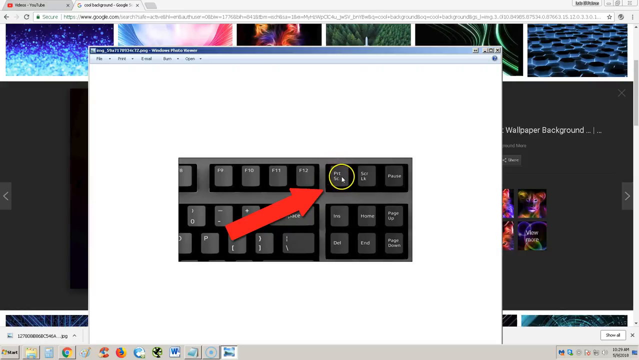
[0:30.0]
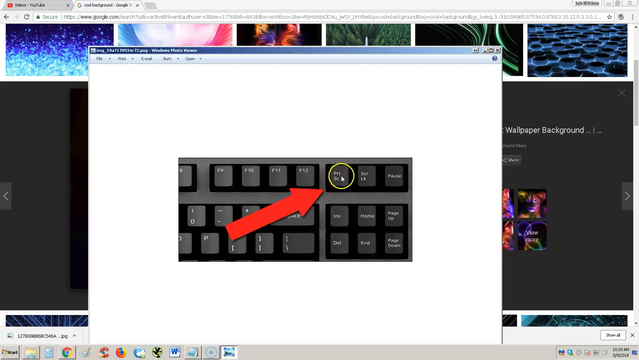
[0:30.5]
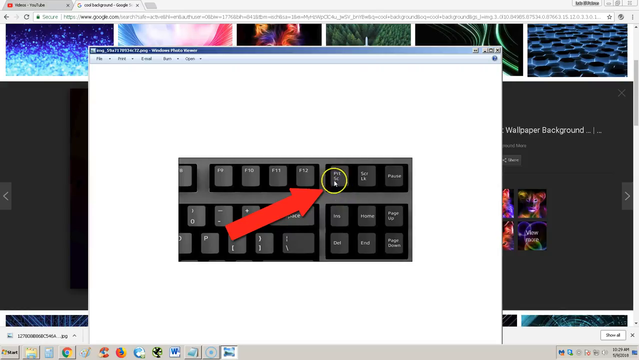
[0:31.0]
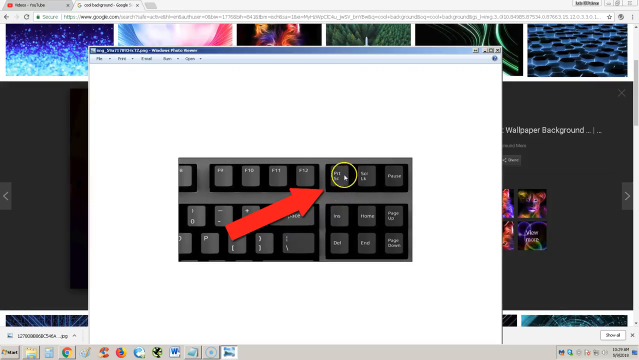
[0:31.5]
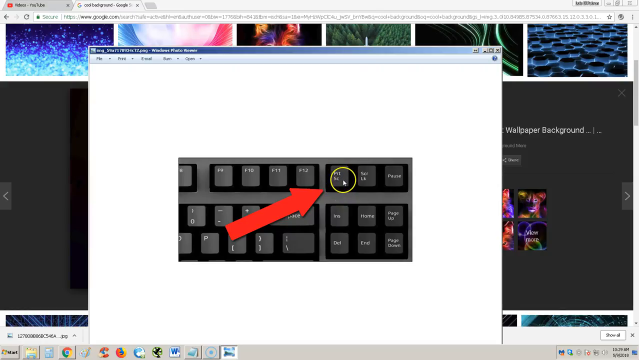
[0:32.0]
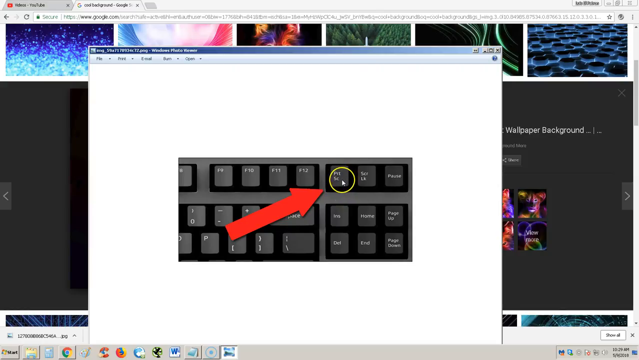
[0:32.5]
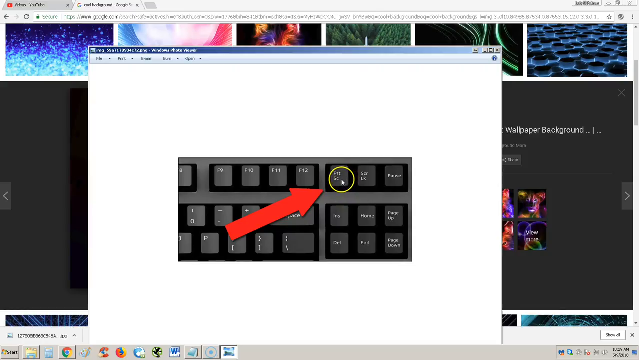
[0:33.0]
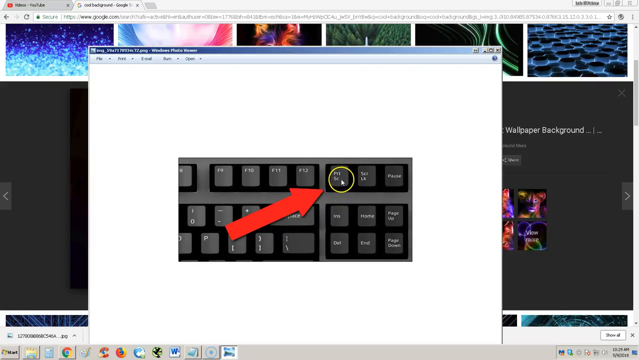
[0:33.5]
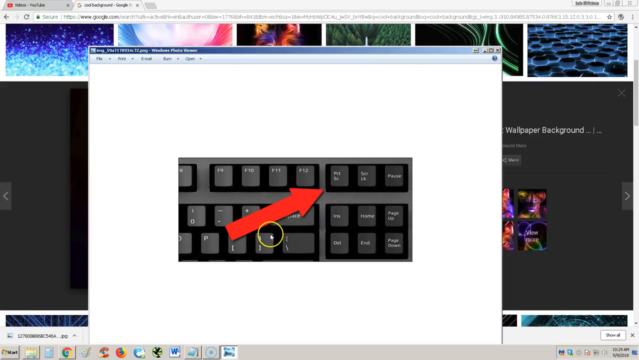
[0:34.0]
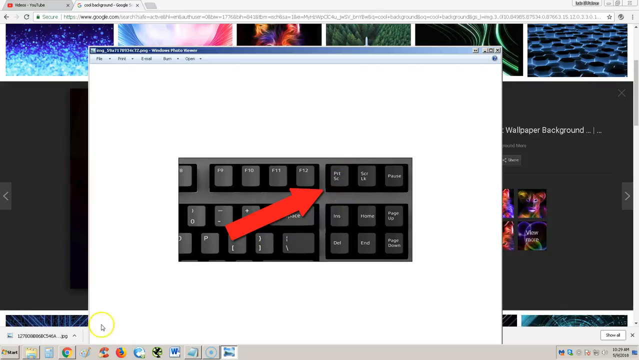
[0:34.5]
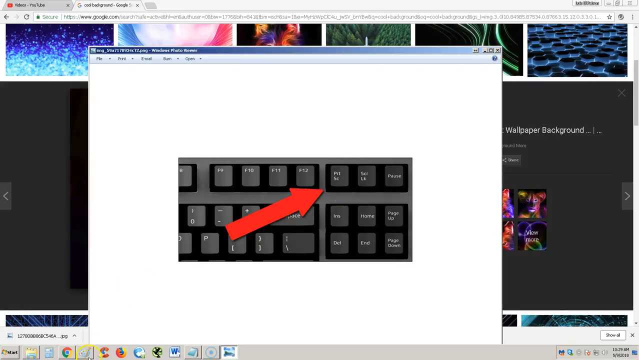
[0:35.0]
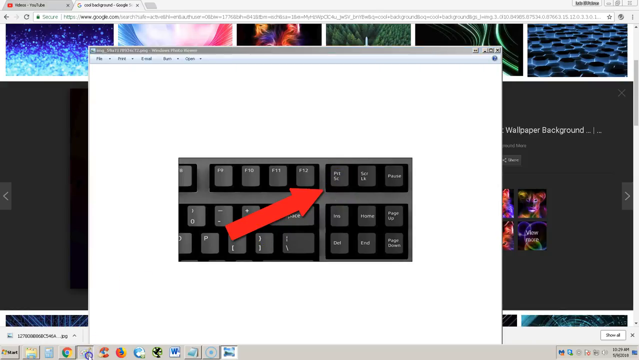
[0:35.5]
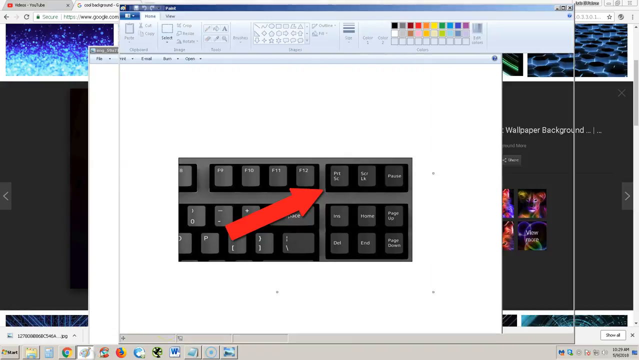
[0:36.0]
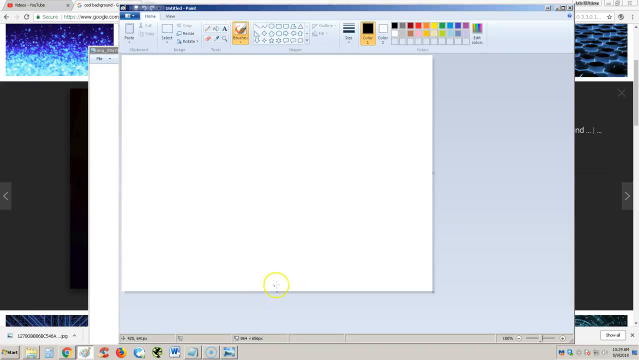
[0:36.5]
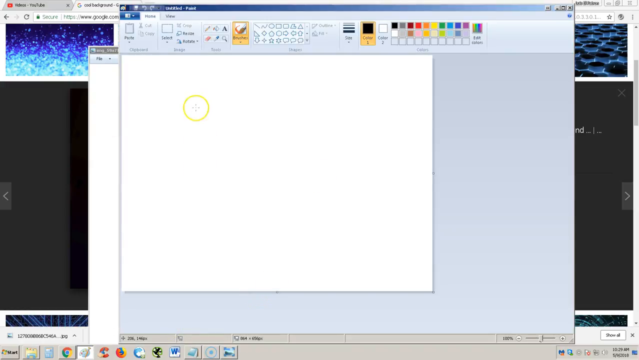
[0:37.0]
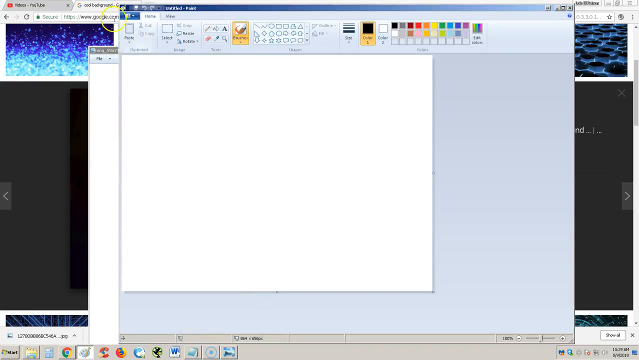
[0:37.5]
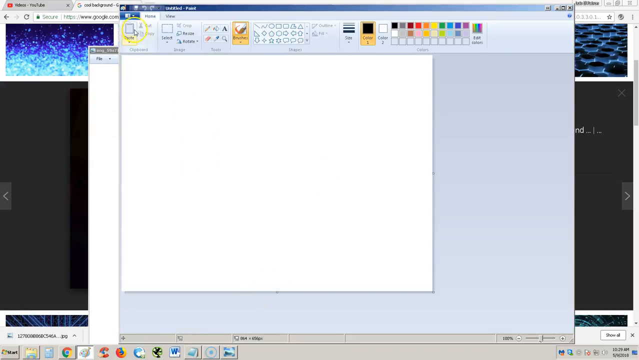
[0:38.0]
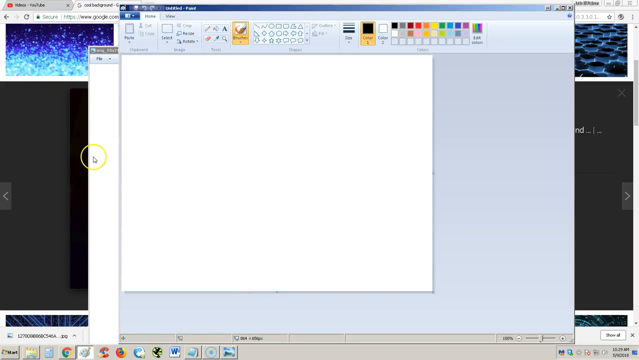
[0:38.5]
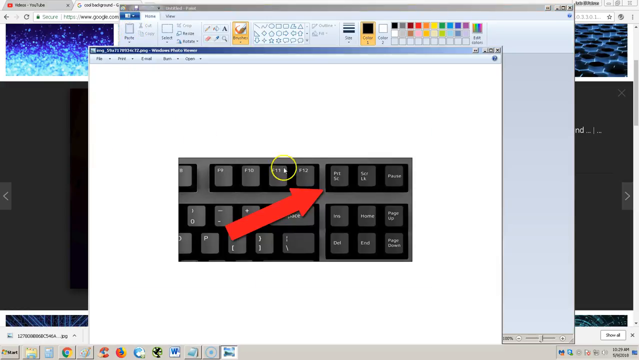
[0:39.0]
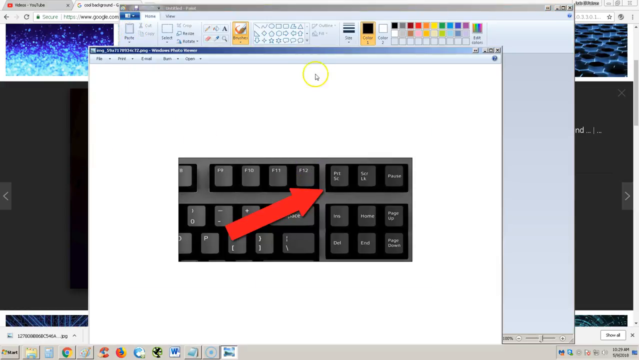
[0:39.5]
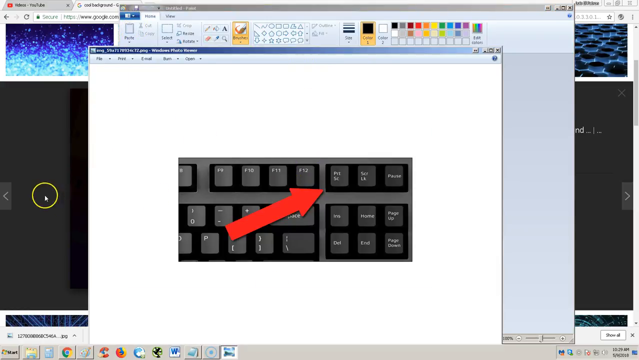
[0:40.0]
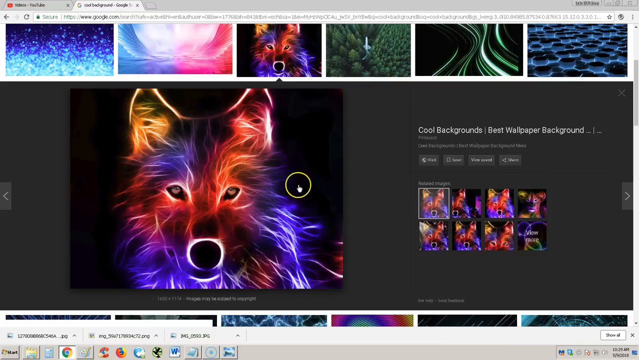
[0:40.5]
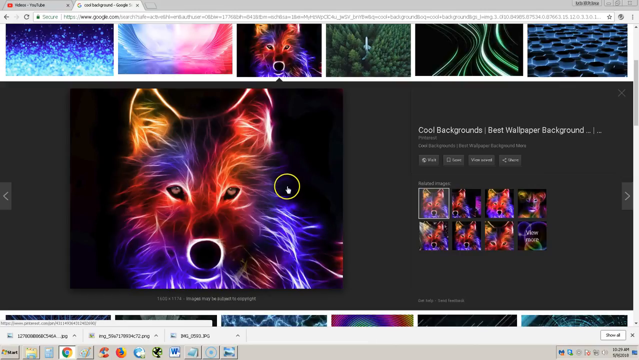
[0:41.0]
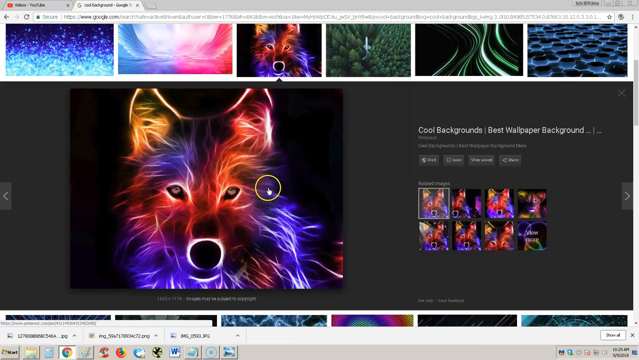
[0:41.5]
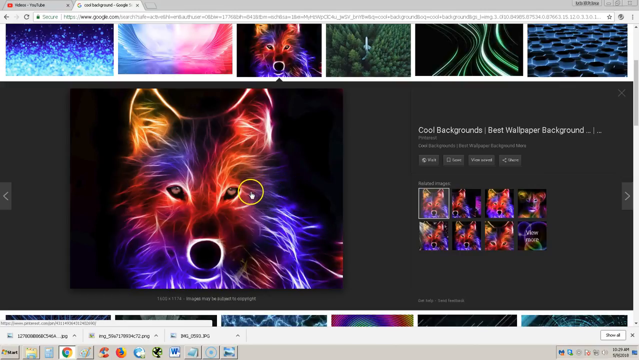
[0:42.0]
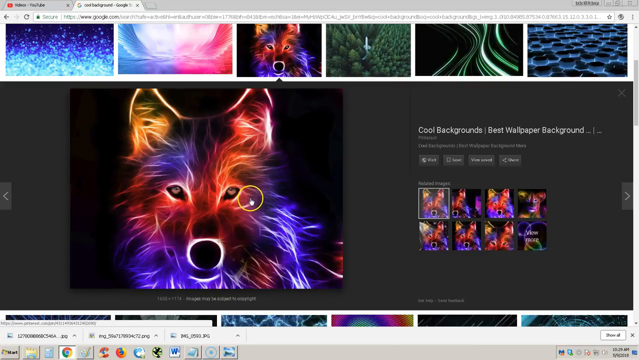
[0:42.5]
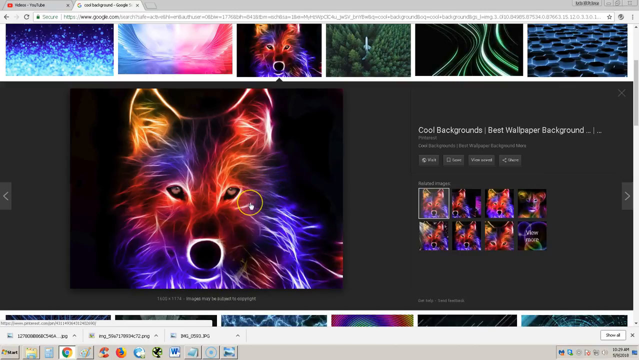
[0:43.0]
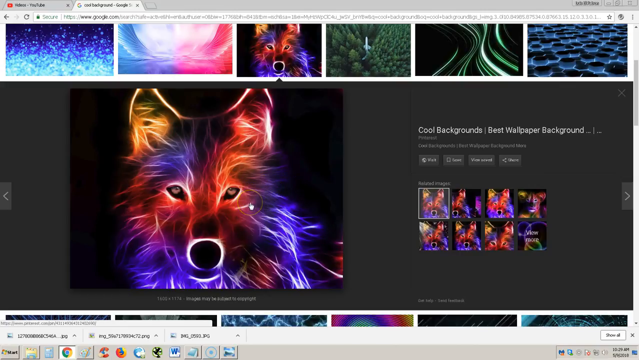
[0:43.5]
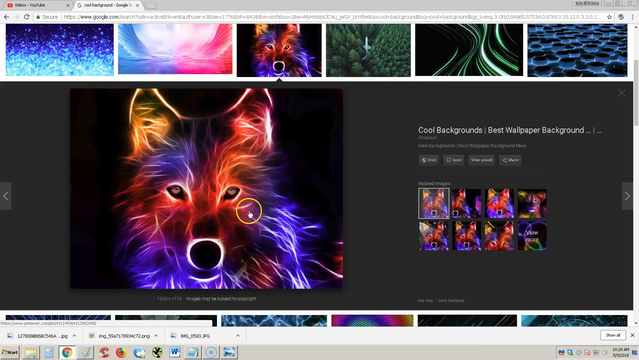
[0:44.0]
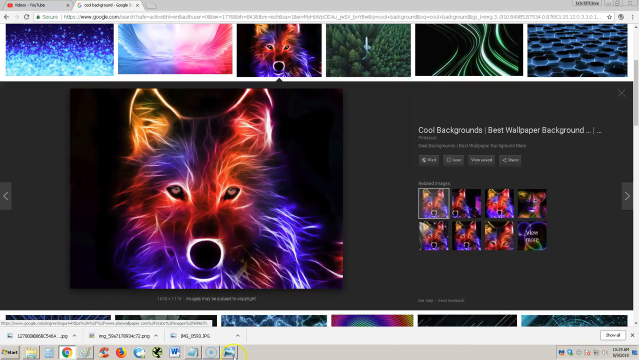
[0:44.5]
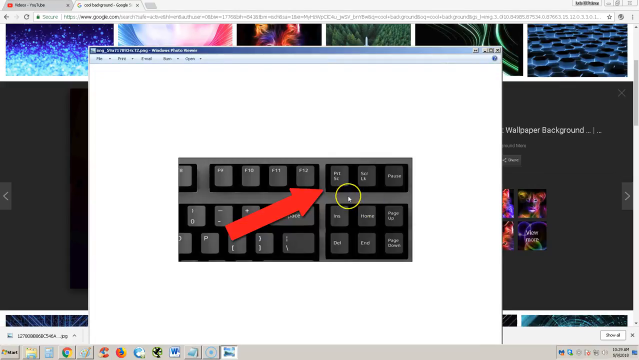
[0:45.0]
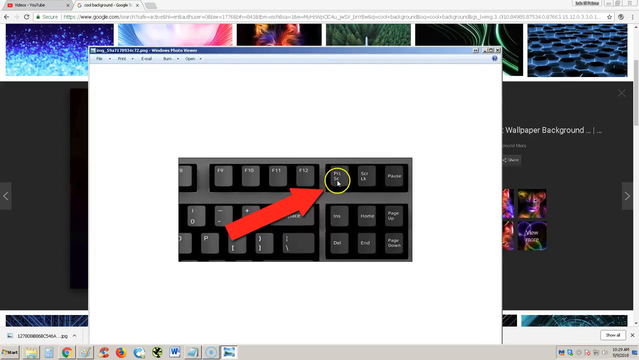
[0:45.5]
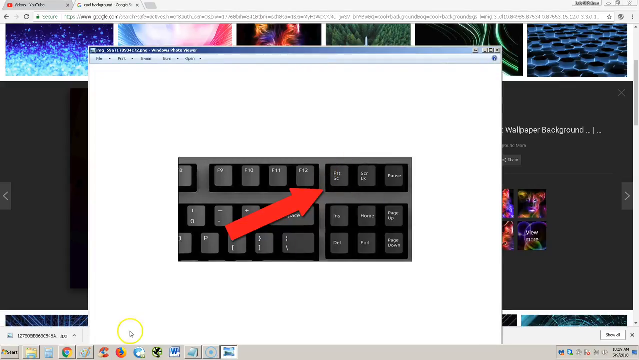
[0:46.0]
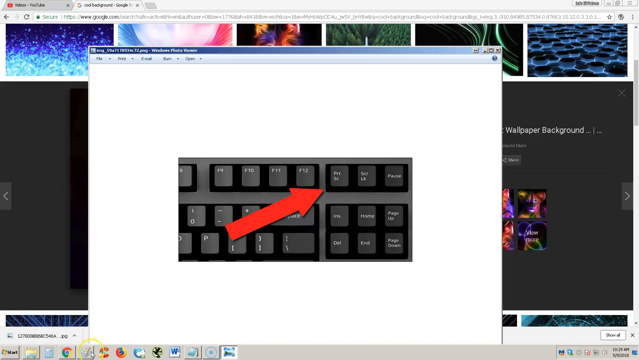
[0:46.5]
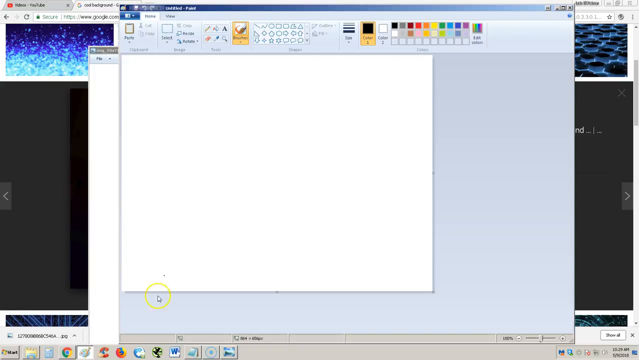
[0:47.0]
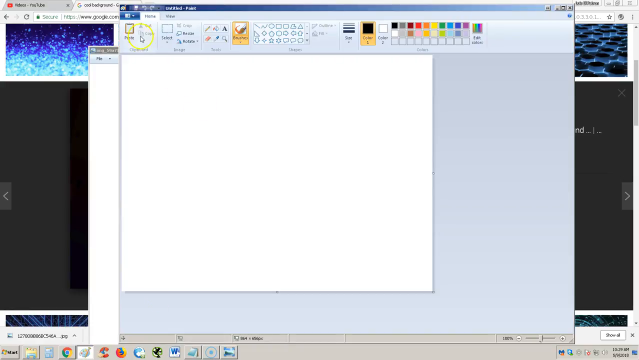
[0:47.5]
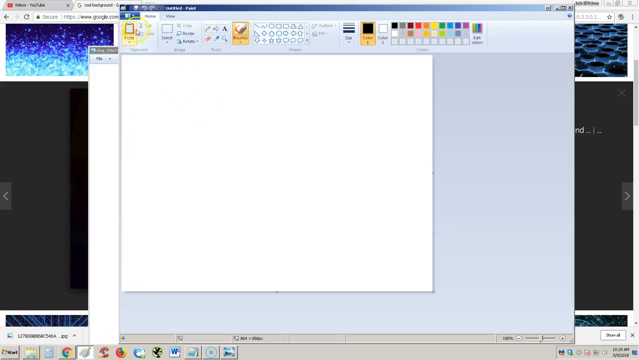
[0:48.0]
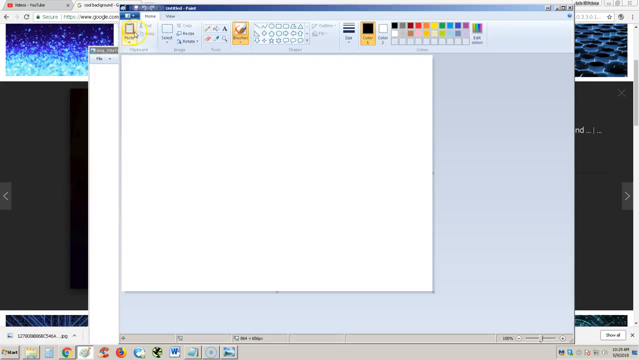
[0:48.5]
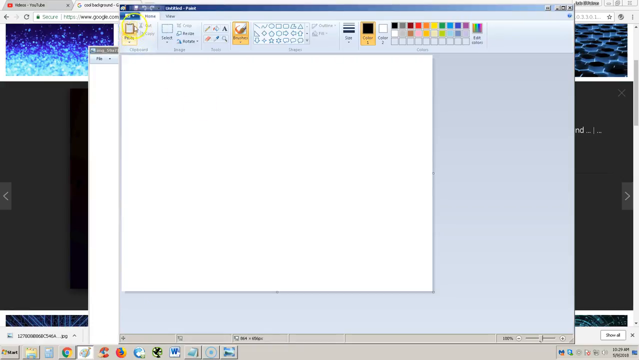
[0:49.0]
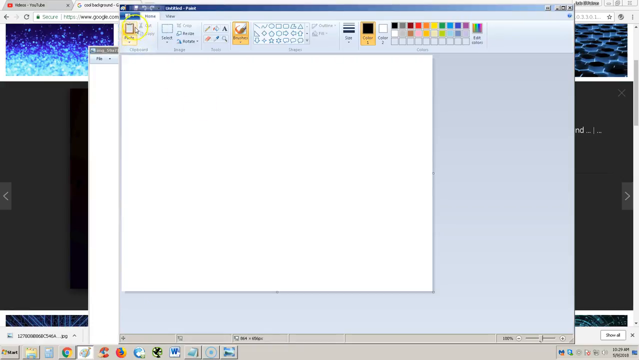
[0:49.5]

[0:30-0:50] The cursor goes around in circles over the print screen button, hovers there, slides down to the base of the arrow, then slides to the lower corner of the screen and off. That window disappears and a new window pops up; it looks like Paint, a white square. The cursor slides down to the empty white space, goes in a circle, and goes back up to the upper left corner. The side panel with the keyboard is clicked, then clicked out of, returning to the wolf image with the neon lights. The keyboard image is brought back, the cursor hovers over print screen, and then Paint is clicked and pops back up in the center. In the upper left corner, the first option is clicked and becomes highlighted, though its text is not readable.